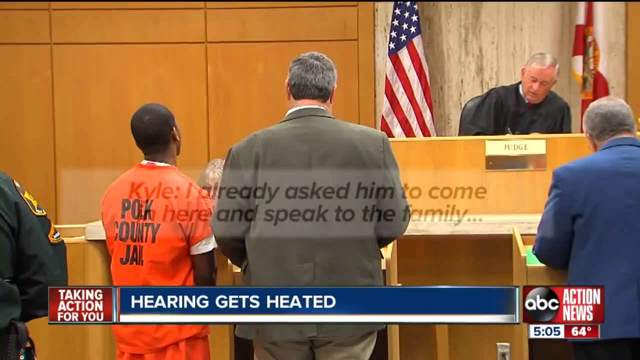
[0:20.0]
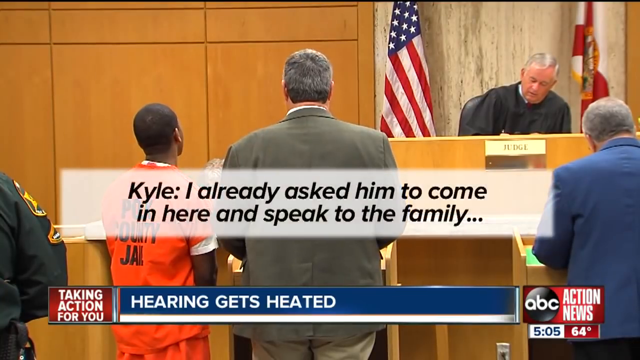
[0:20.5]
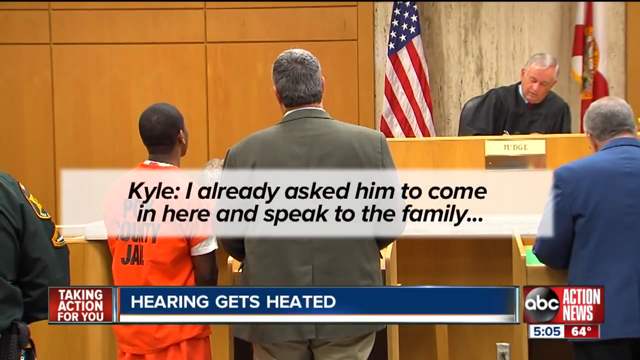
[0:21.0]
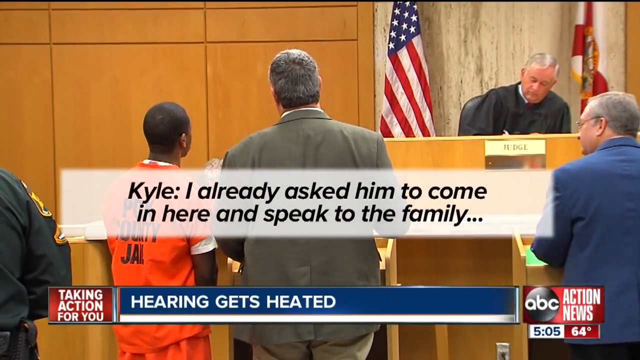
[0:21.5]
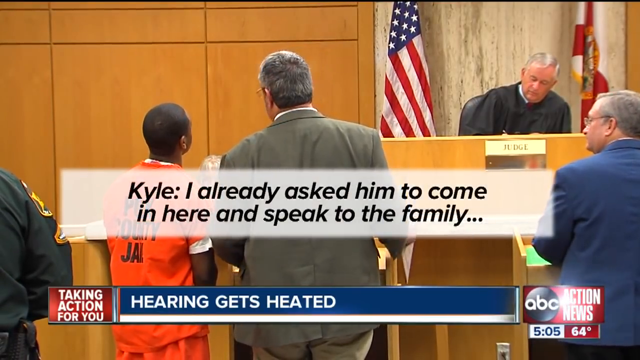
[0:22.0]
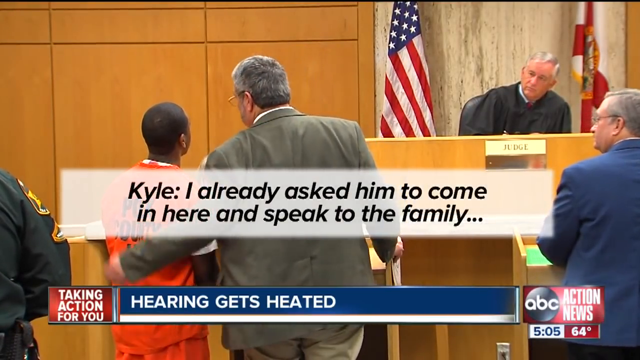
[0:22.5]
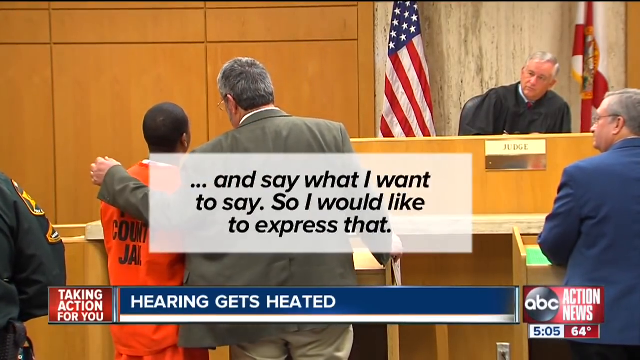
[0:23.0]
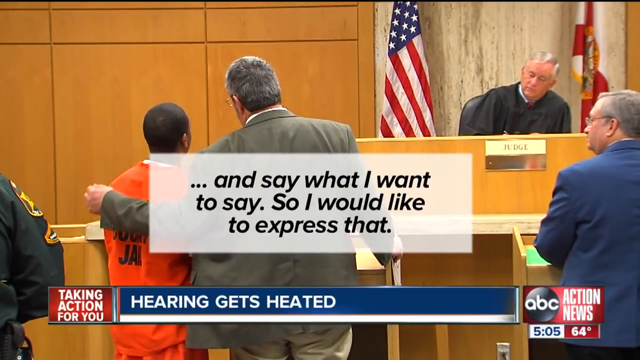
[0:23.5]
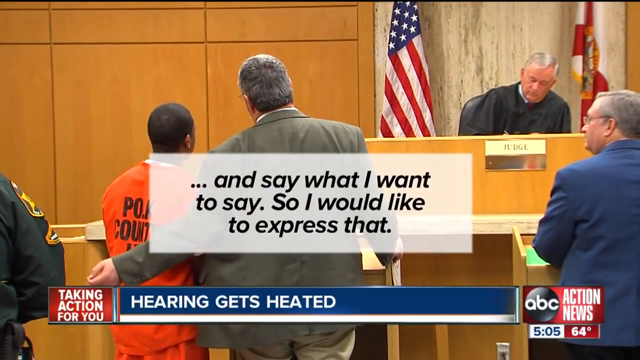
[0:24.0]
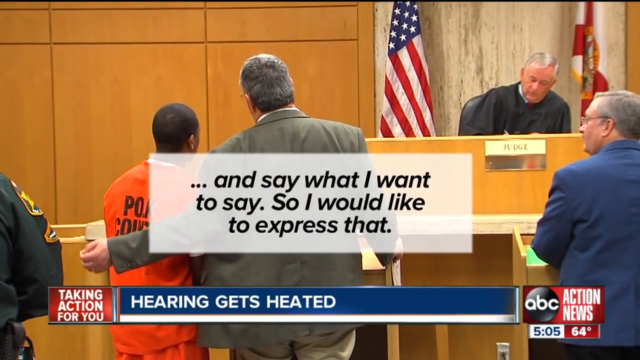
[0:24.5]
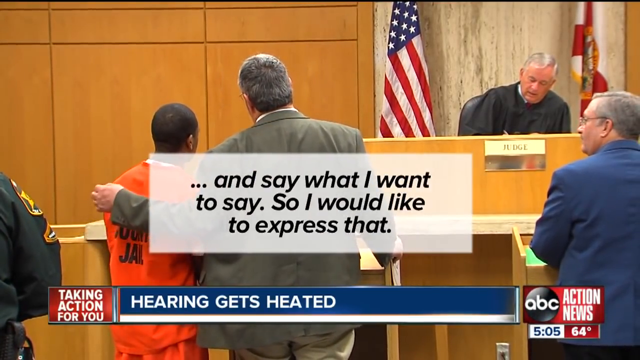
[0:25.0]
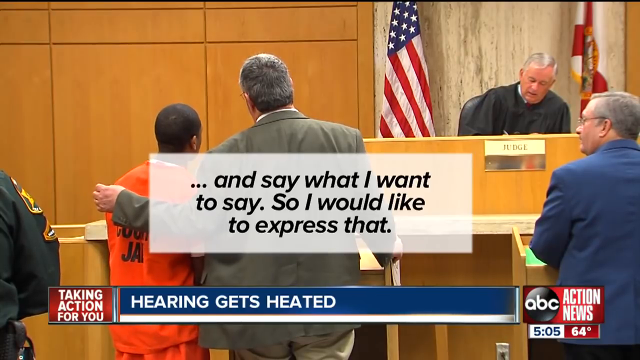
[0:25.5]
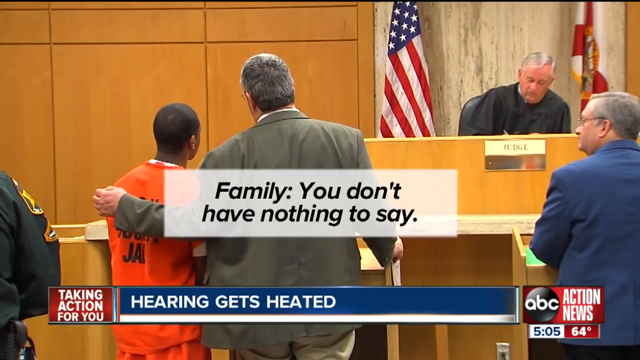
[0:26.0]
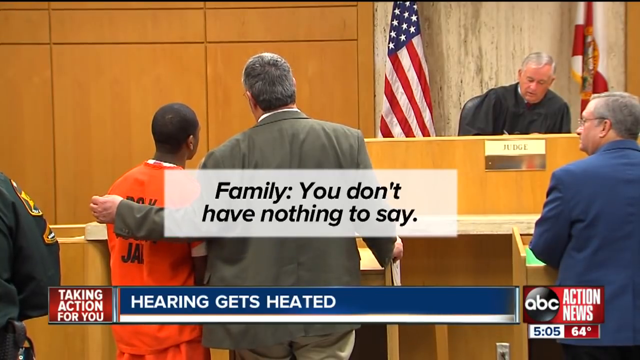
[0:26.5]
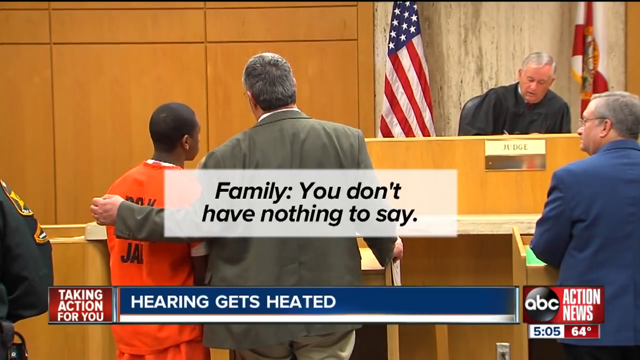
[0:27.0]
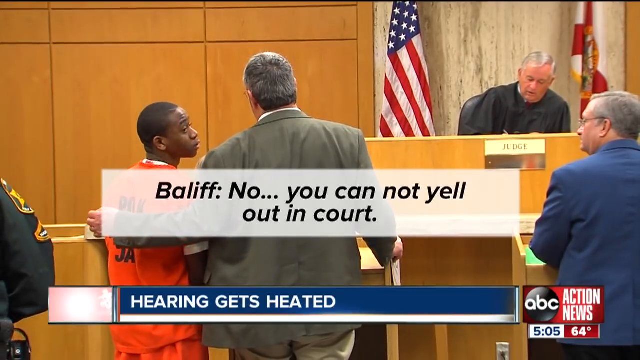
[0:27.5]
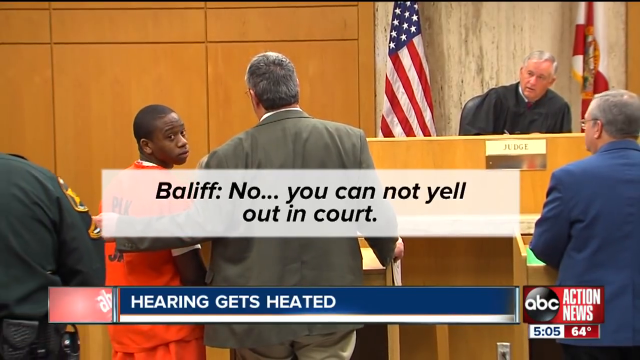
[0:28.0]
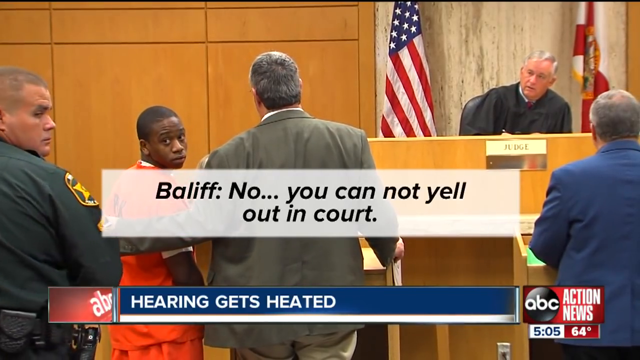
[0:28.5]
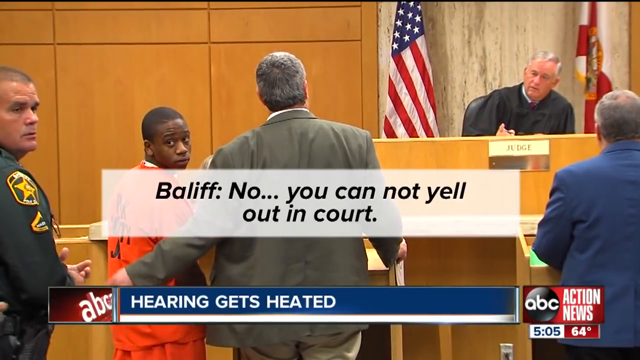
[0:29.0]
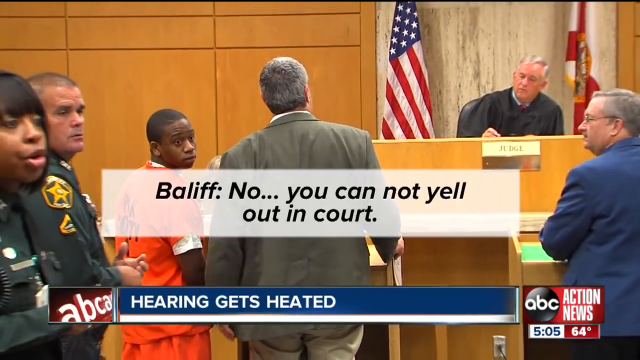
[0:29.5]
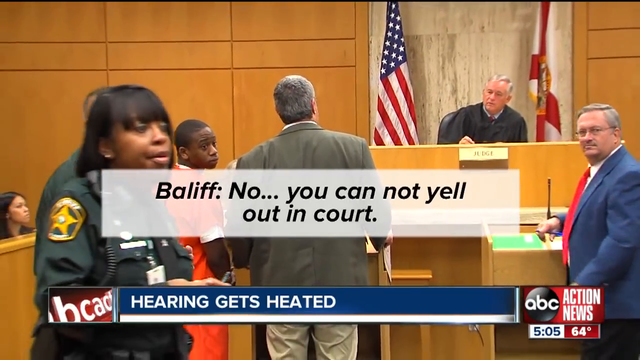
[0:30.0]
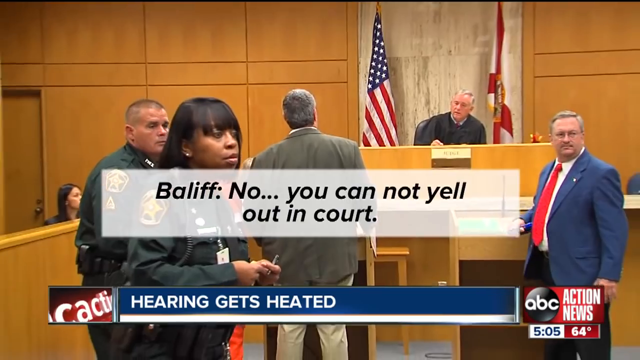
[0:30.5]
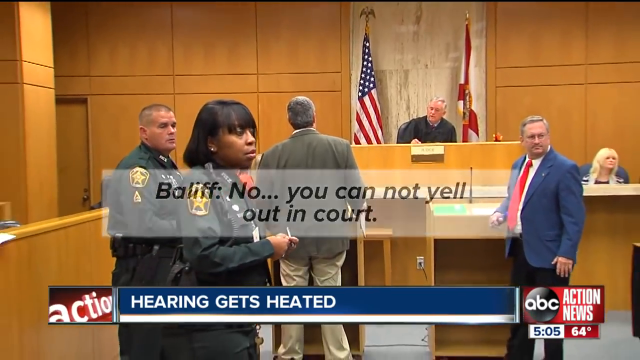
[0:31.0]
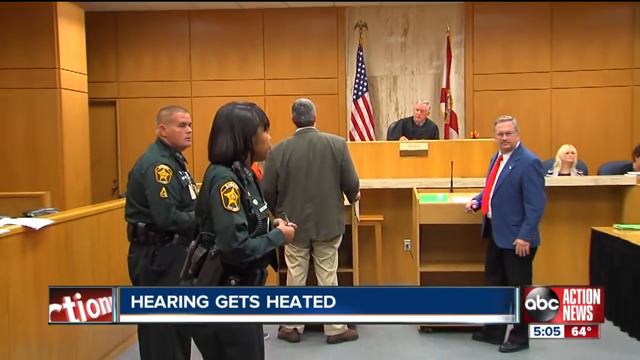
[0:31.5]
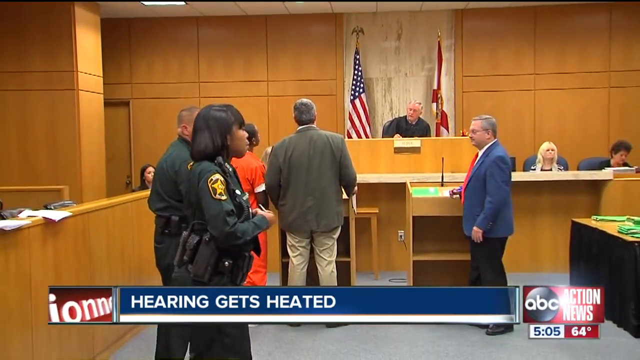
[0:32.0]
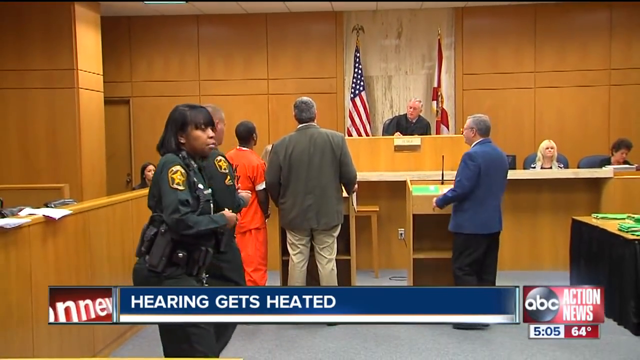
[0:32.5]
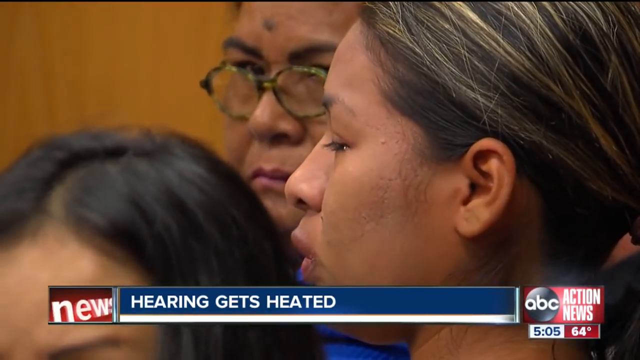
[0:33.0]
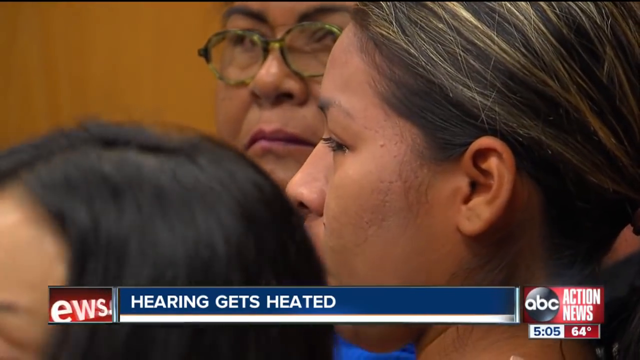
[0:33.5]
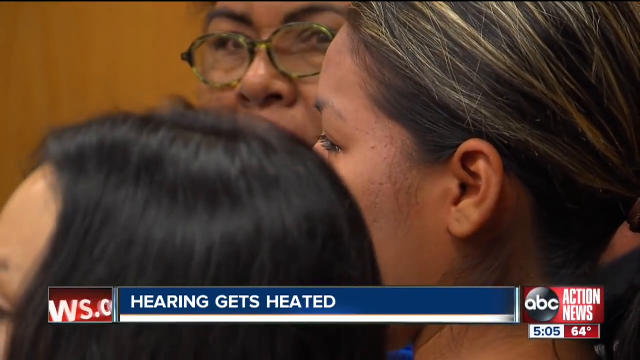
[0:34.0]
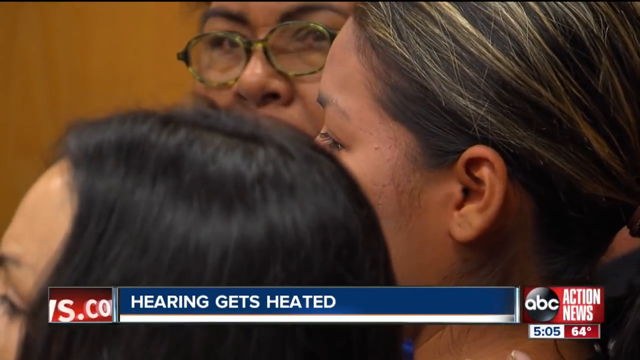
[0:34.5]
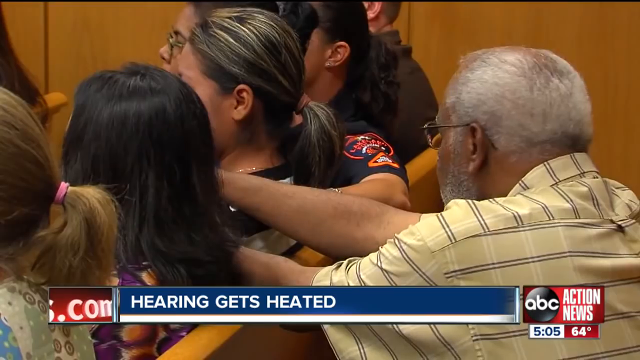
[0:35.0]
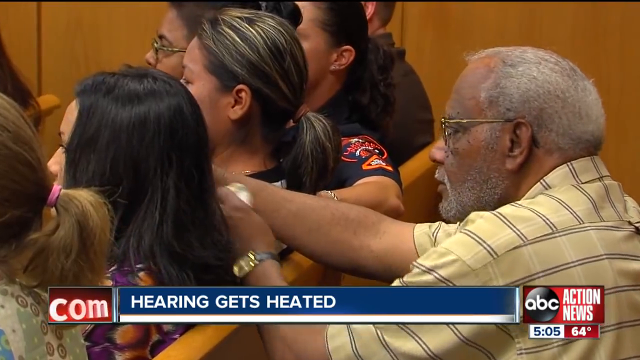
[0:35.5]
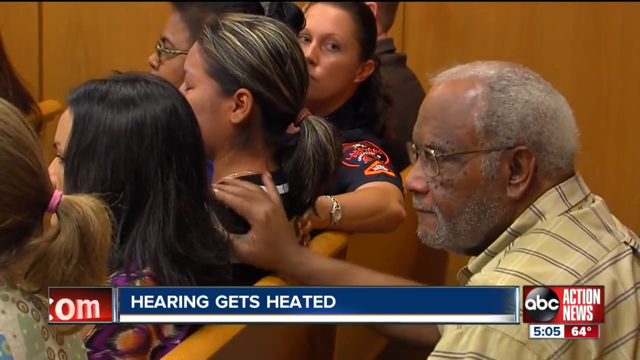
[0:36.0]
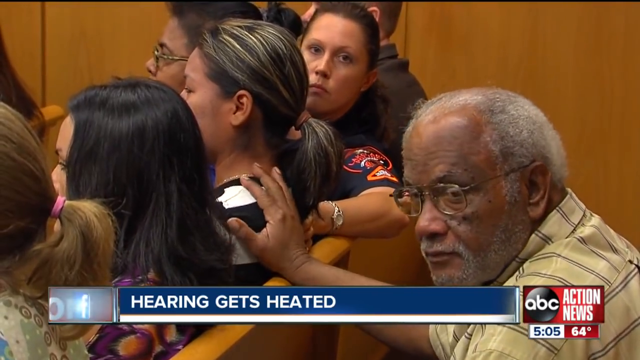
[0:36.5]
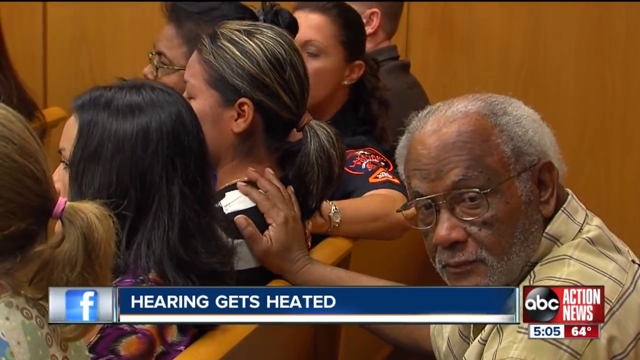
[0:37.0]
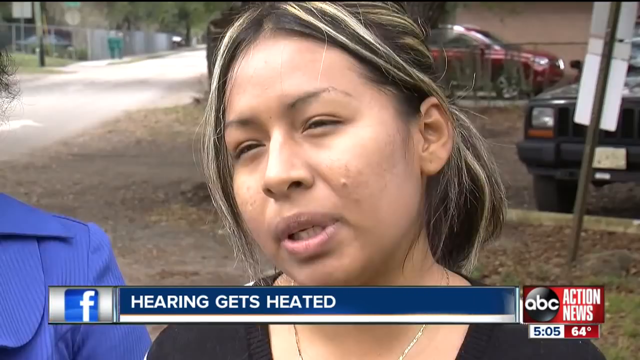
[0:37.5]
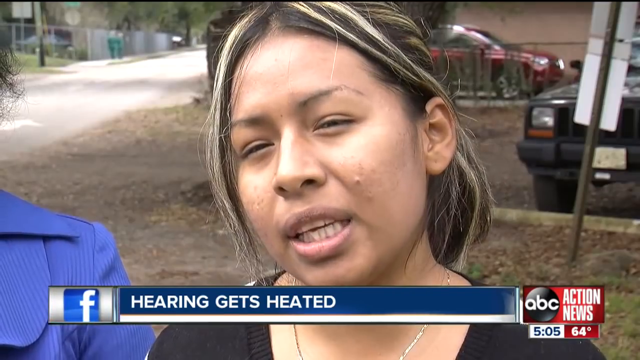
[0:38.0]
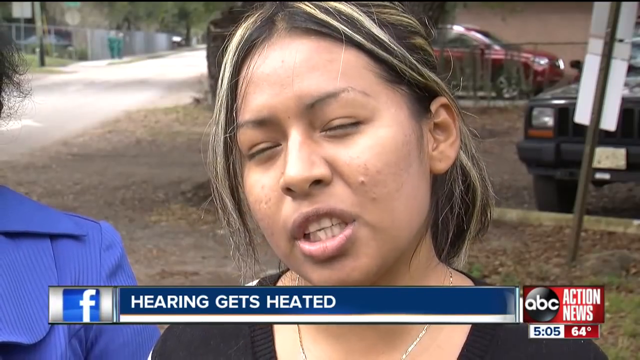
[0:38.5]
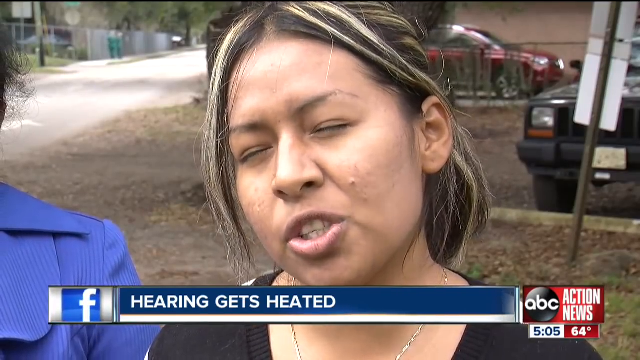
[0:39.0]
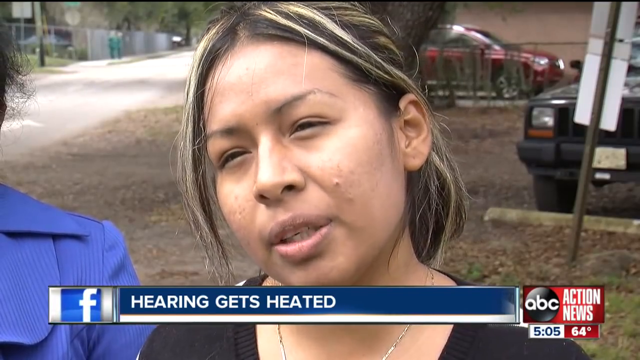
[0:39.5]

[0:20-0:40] The same courtroom is shown. In the background is a white wall with a flag on either side: an American flag on the left and a state flag on the right. Directly in front of the flags is a stand that looks to be some sort of podium or desk, and the judge sits at it, wearing an all-black suit, with short gray hair. A name tag on the front of the desk says "judge." In front of the judge are four men. On the far right is an attorney in a blue suit with short gray hair. To his left is another attorney, seemingly the defense attorney, in a brown suit with brown hair. To his left is the defendant, a Black man in an orange jumpsuit that says "Polk County Jail," facing the judge as he awaits the verdict. To his left is a police officer in a black uniform. Text at the bottom says "hearing gets heated," and words across the middle of the screen show the conversation going back and forth. Another Black woman is also present. The police officer walks into frame.